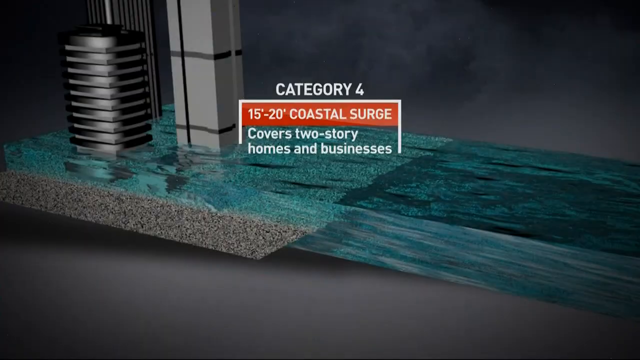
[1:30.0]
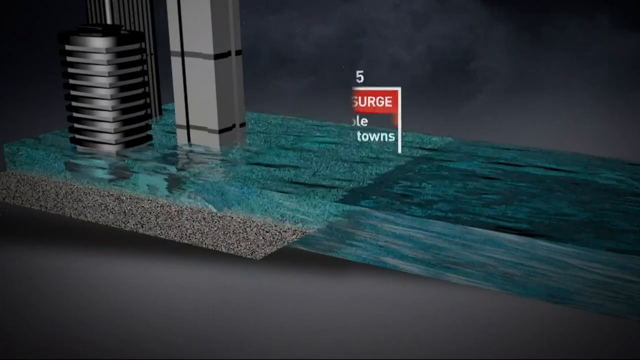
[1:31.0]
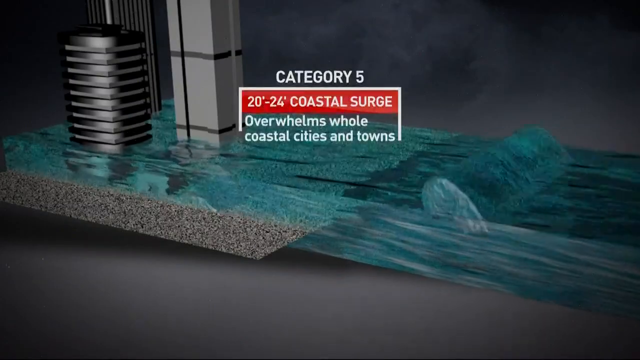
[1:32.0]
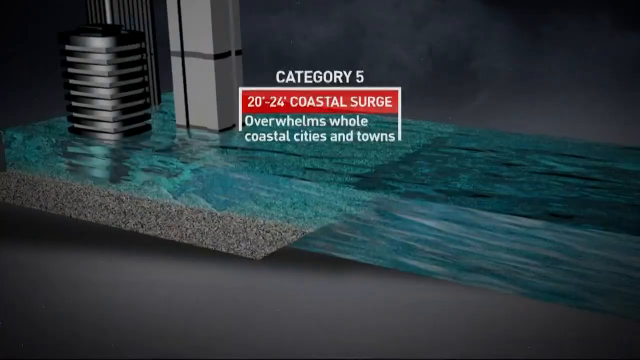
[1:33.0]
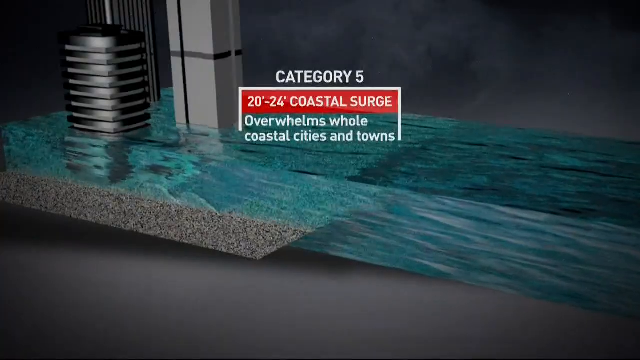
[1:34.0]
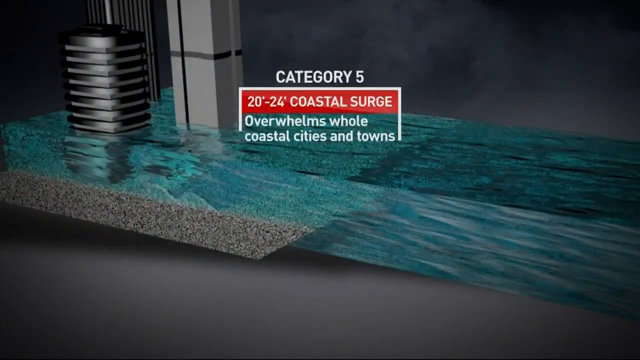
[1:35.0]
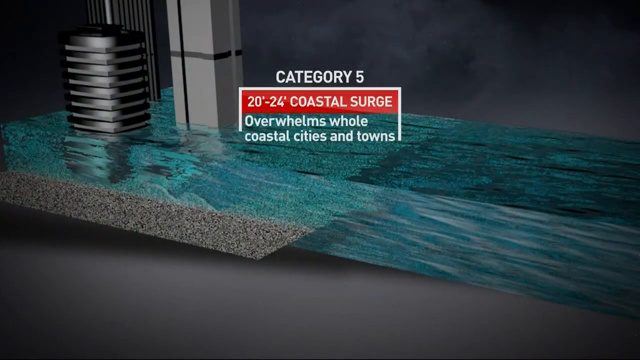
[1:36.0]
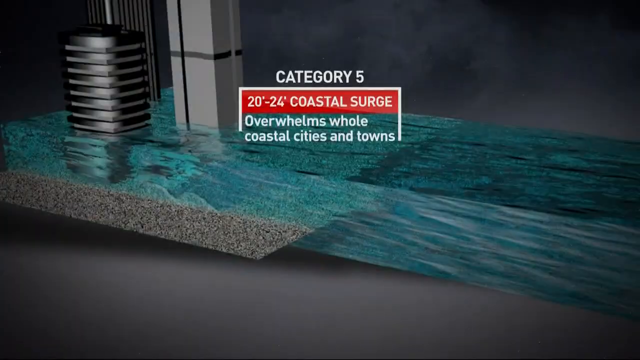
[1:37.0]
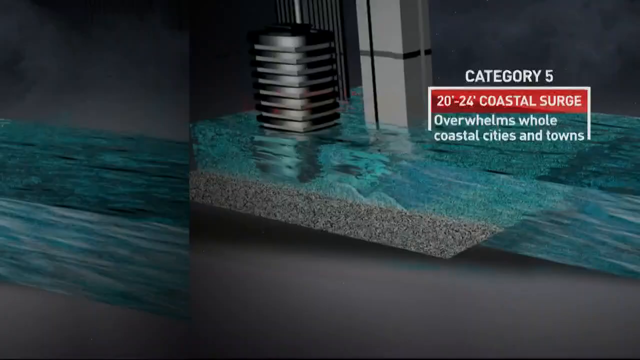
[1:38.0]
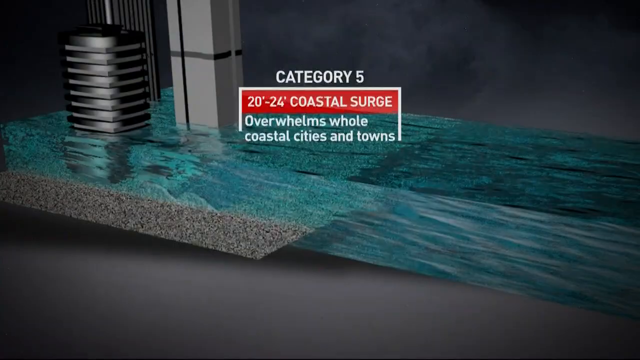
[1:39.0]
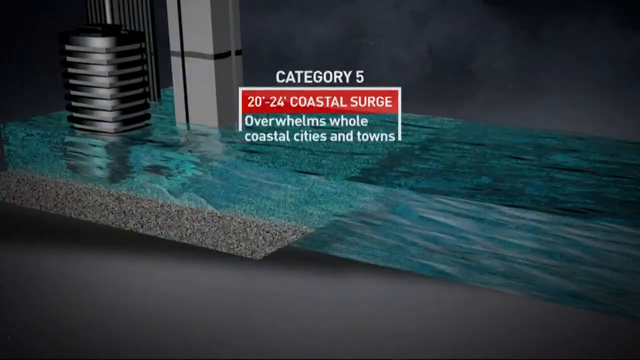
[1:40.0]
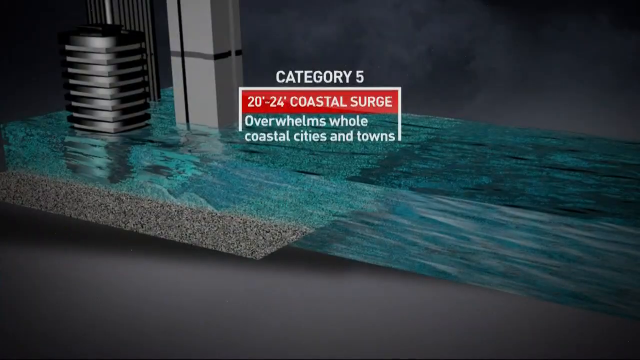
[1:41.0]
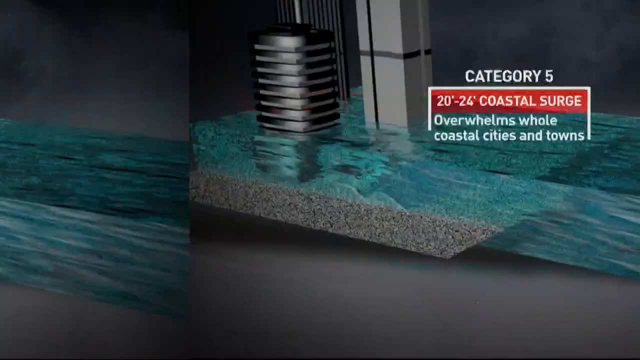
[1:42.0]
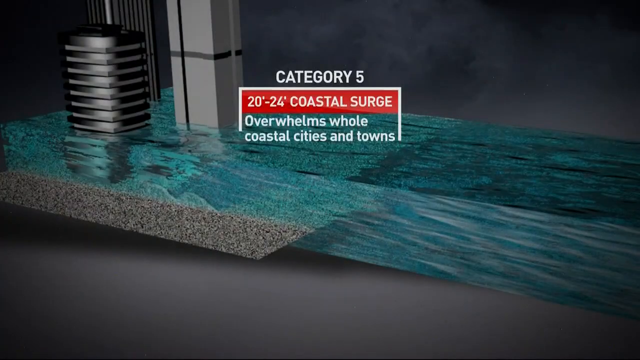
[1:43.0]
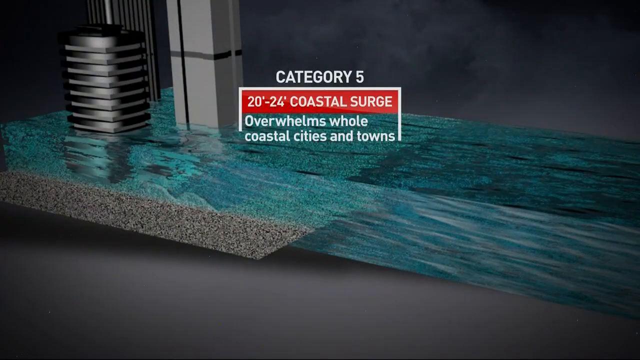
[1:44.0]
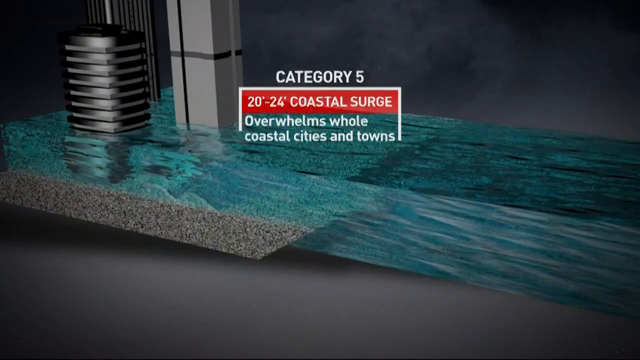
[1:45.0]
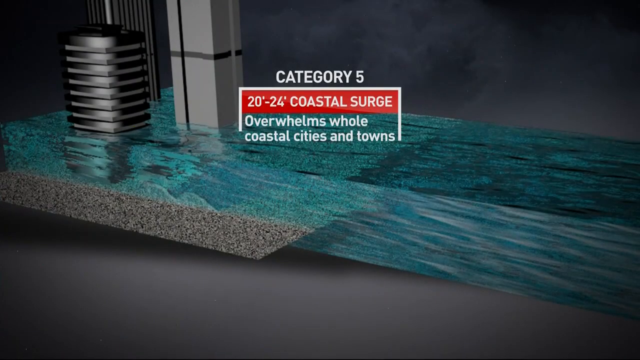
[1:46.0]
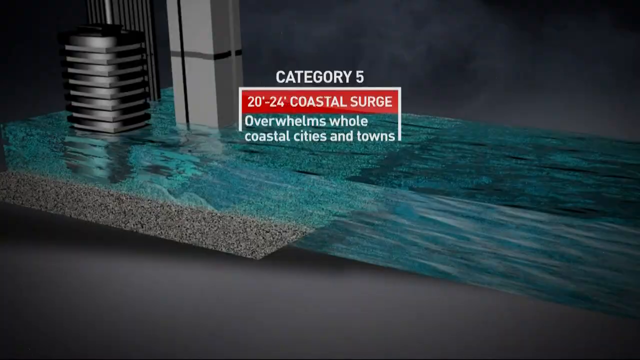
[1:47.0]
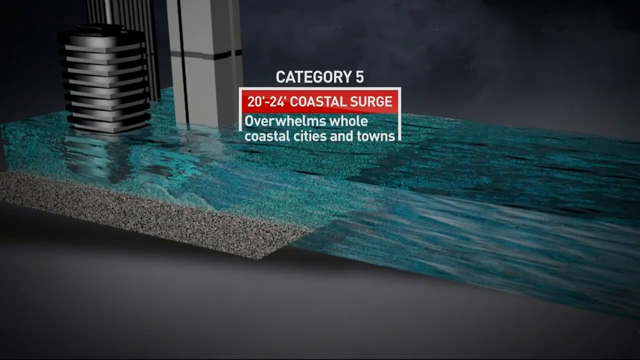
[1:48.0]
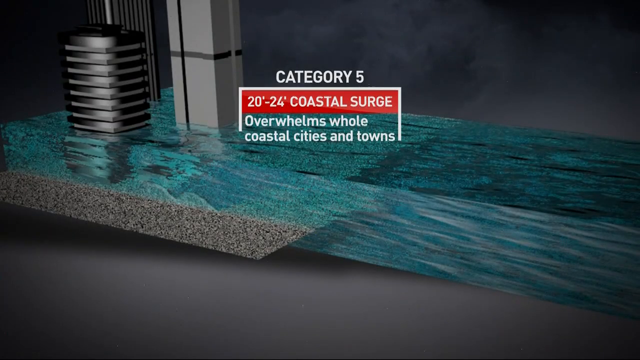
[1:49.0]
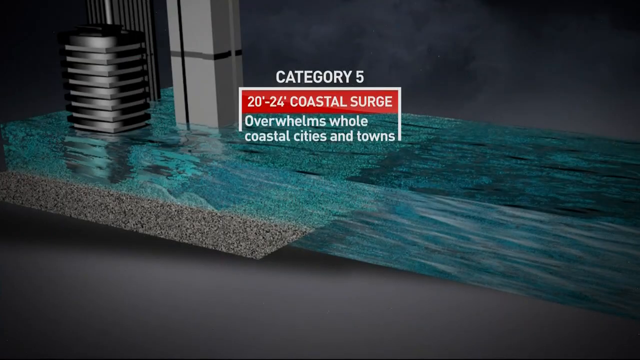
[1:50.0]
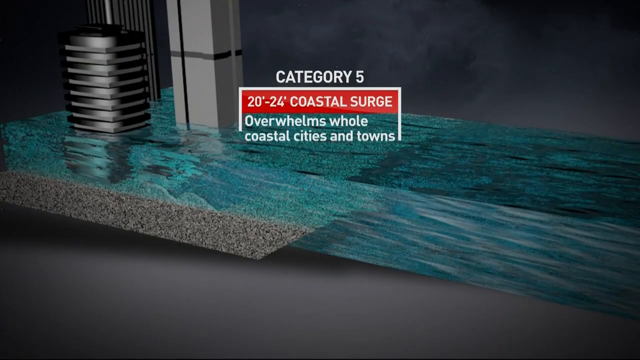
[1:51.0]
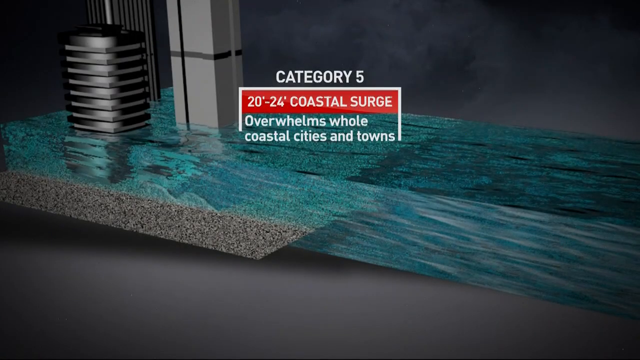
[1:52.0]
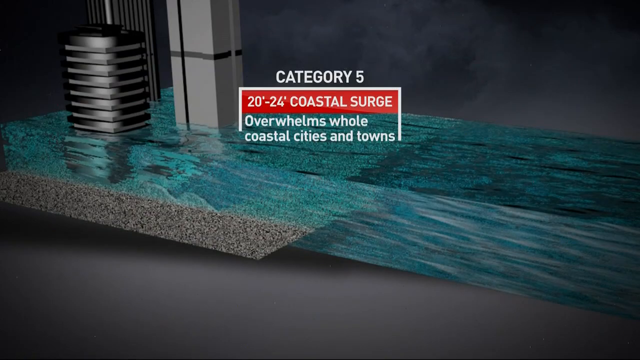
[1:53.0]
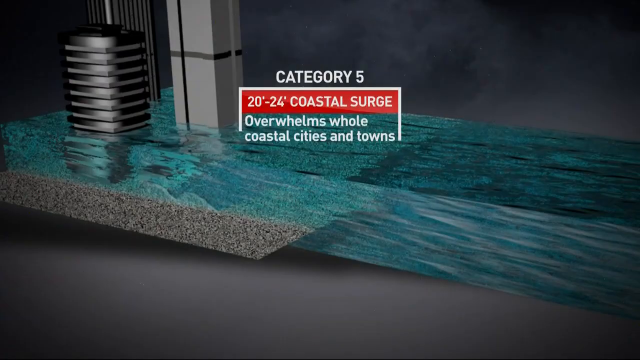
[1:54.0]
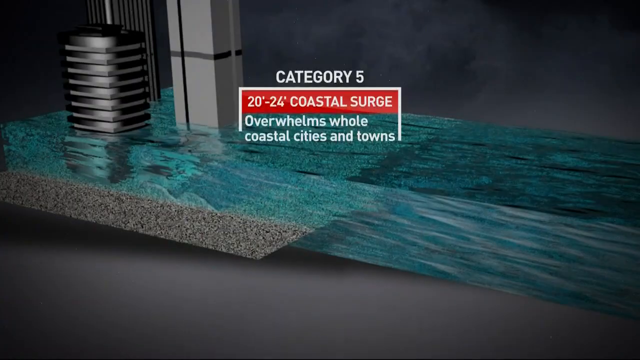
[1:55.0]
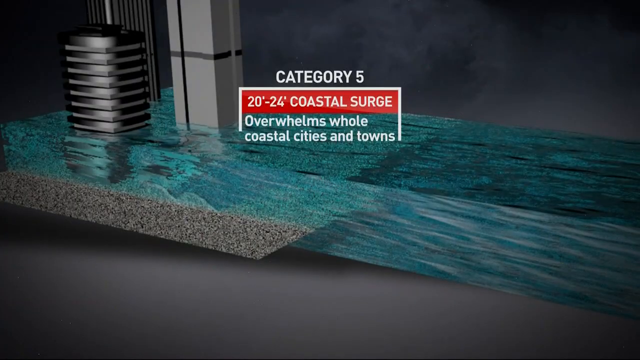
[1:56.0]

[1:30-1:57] "Category five" is written in the centre, and below it a highlight reads "20 to 24 coastal surge" in white, with "overwhelms all coastal cities and towns" at the bottom. The dark green carpet keeps spreading across the screen, rolling from the right side to the left side. The carpet continues rolling and the picture flashes; the background of the picture is green and the words are in the centre of the screen. The bottom part of the screen is green, and the background of the picture is black. This is category five shown on the screen.